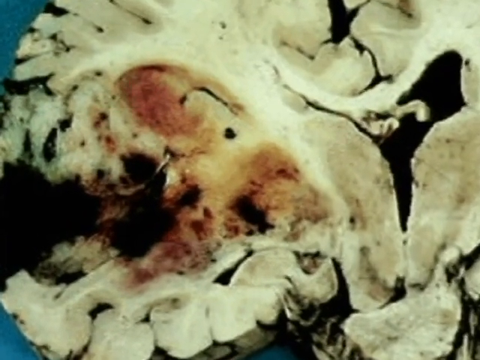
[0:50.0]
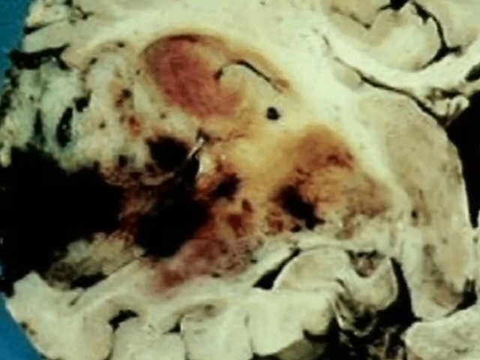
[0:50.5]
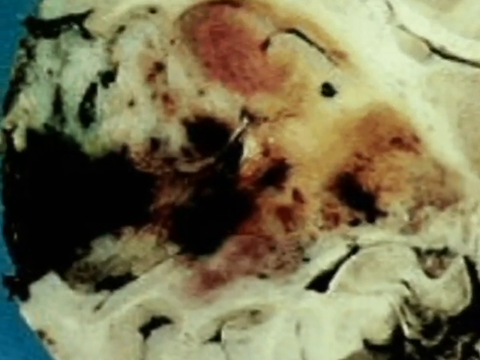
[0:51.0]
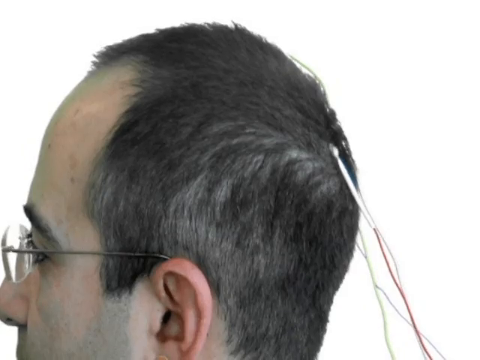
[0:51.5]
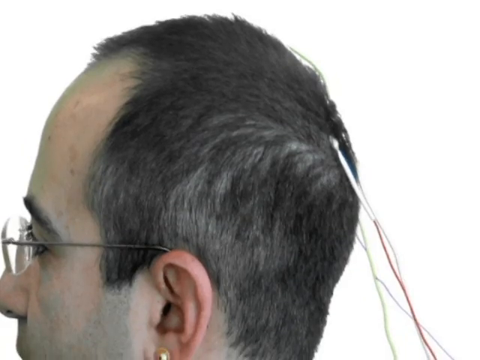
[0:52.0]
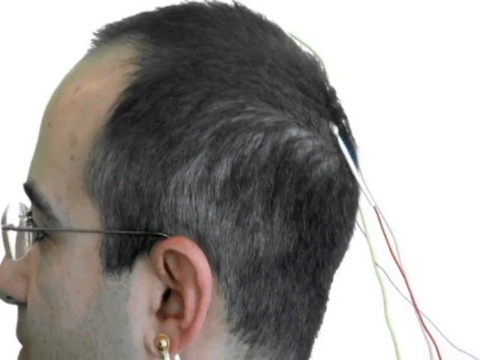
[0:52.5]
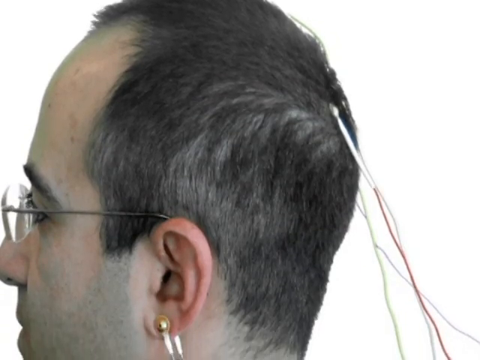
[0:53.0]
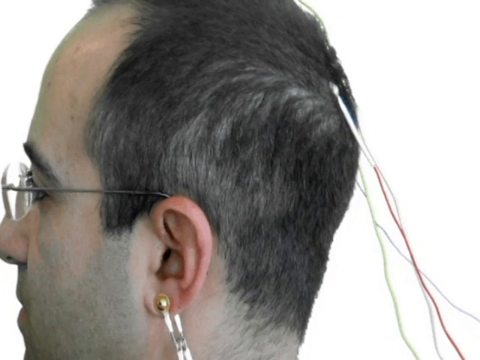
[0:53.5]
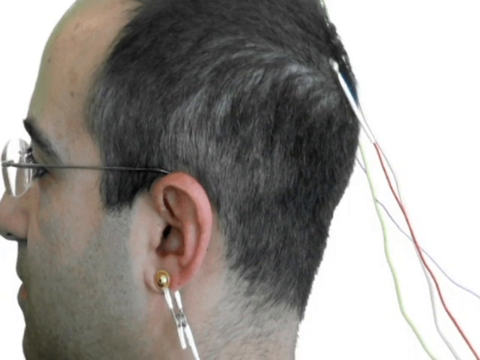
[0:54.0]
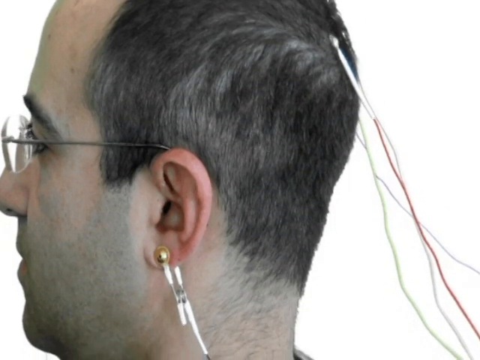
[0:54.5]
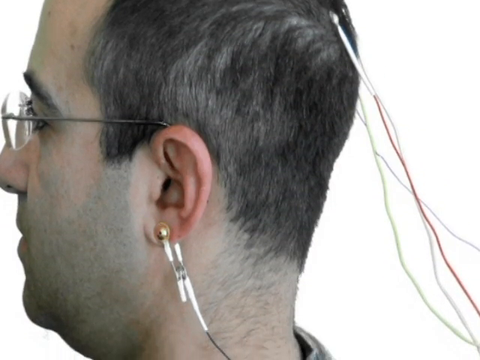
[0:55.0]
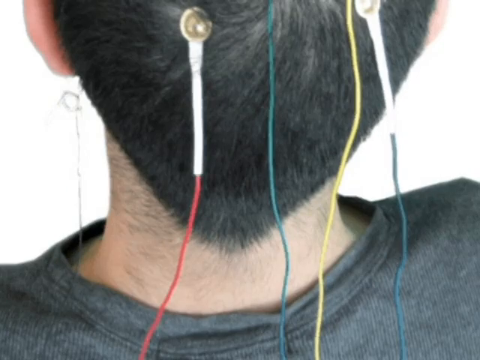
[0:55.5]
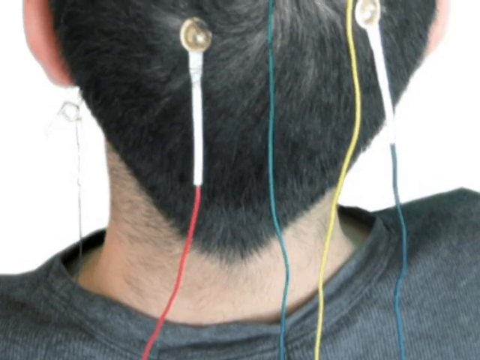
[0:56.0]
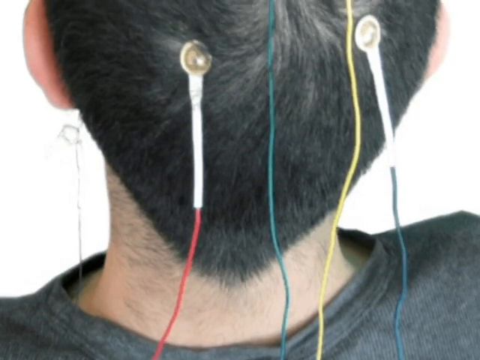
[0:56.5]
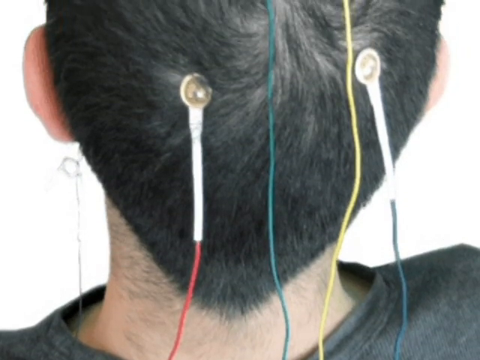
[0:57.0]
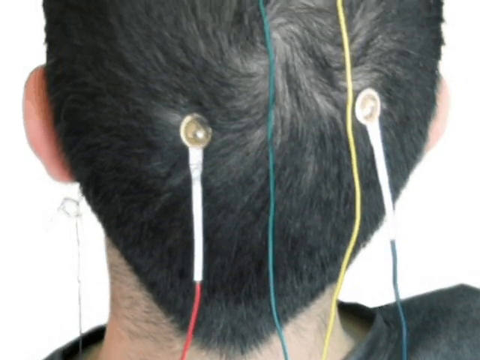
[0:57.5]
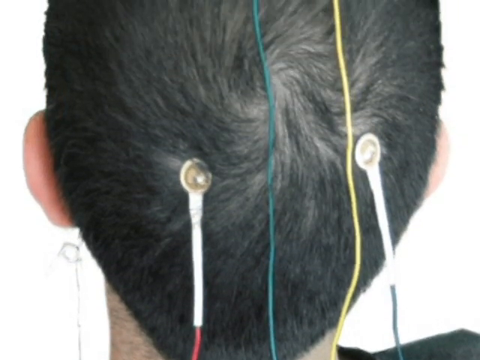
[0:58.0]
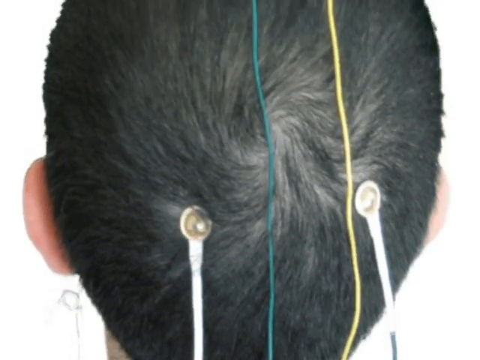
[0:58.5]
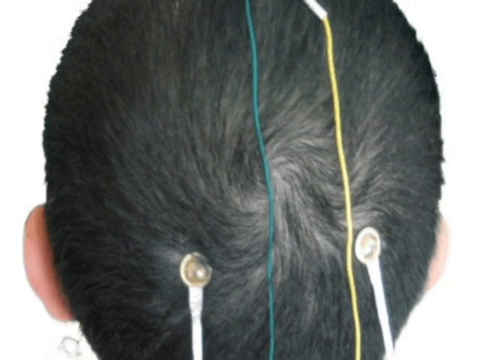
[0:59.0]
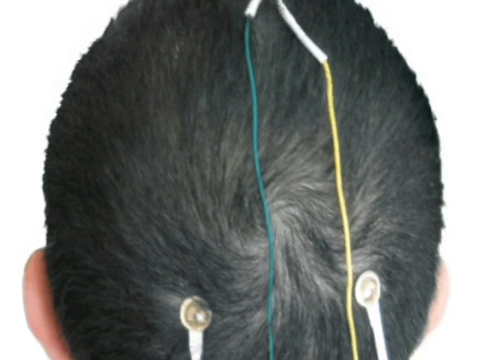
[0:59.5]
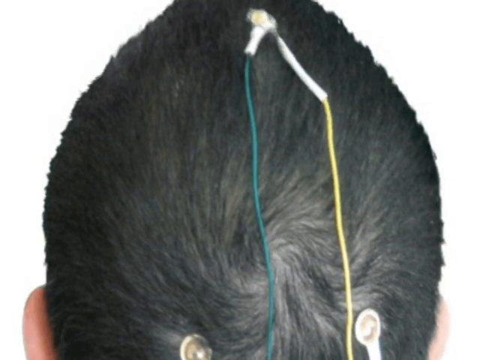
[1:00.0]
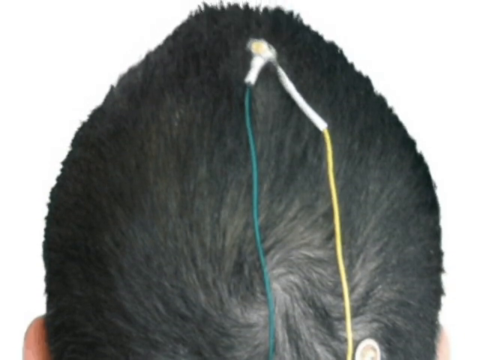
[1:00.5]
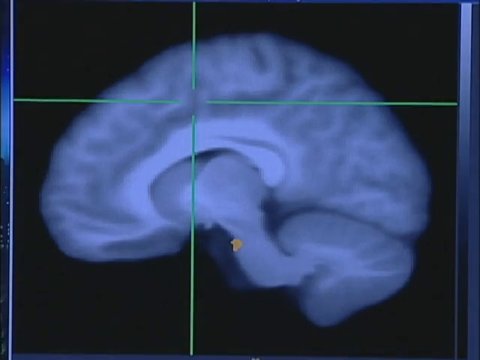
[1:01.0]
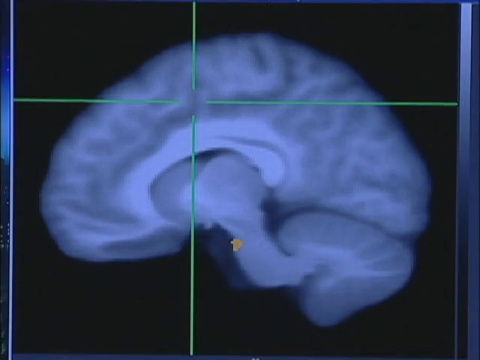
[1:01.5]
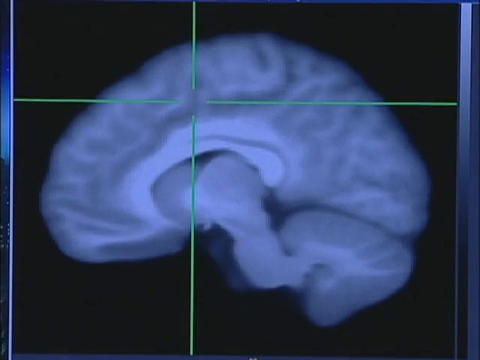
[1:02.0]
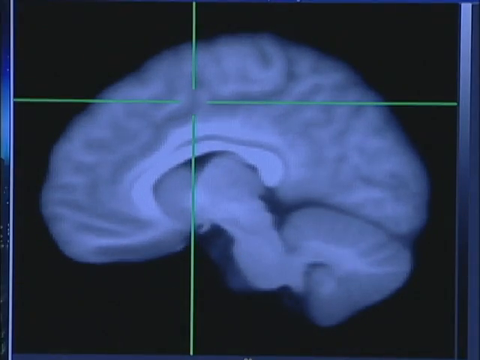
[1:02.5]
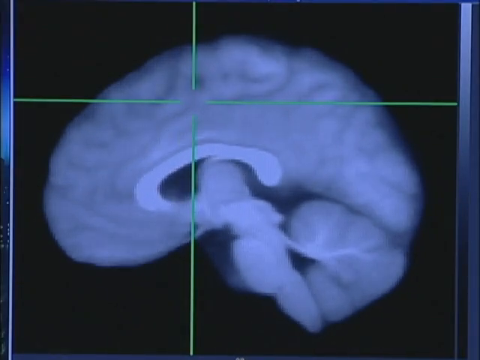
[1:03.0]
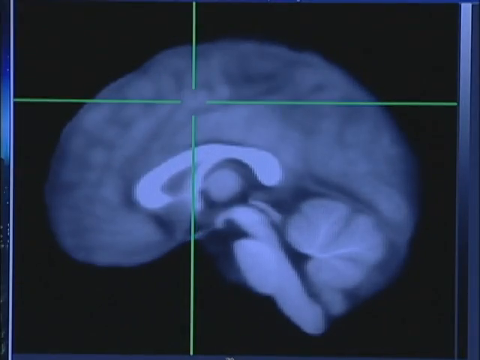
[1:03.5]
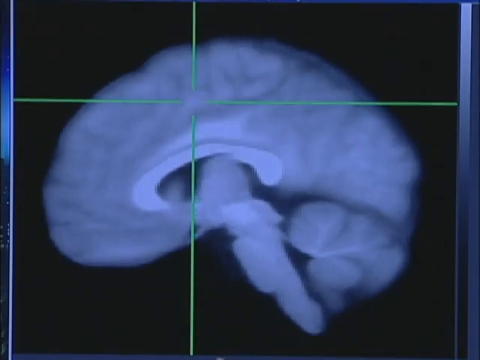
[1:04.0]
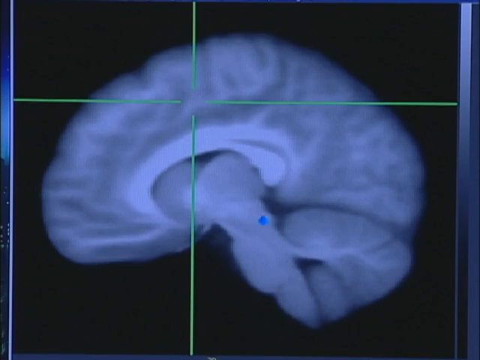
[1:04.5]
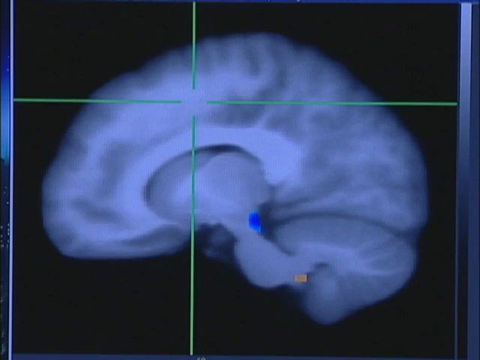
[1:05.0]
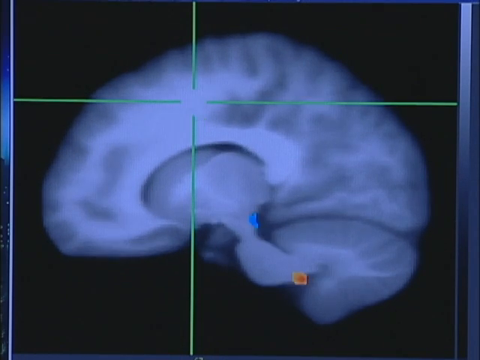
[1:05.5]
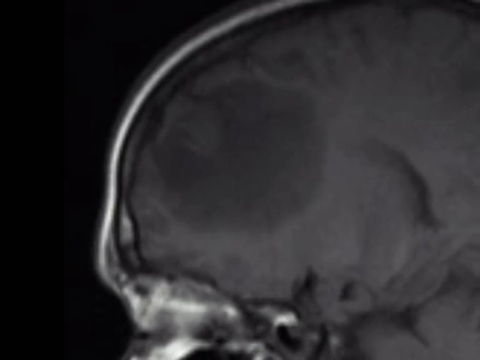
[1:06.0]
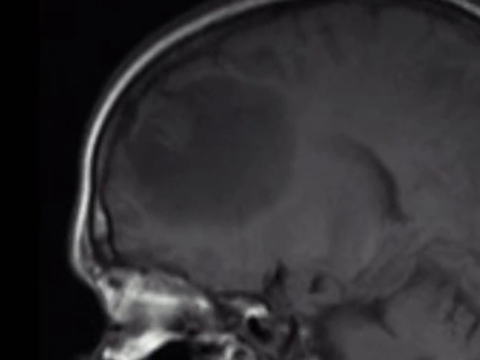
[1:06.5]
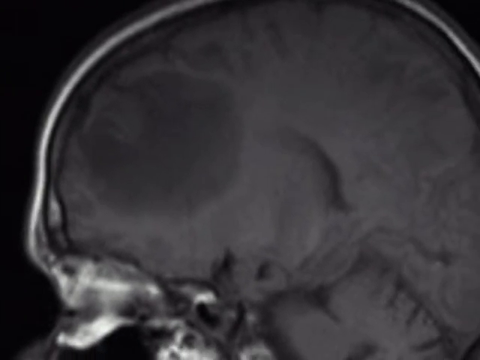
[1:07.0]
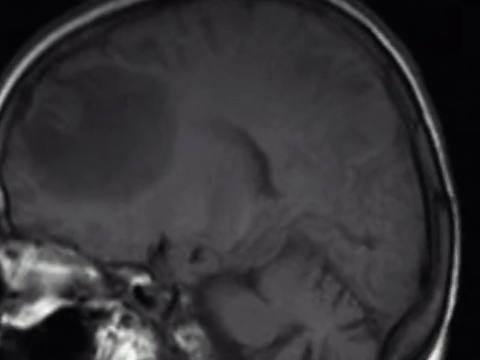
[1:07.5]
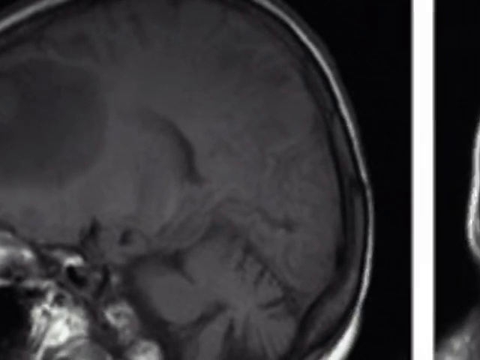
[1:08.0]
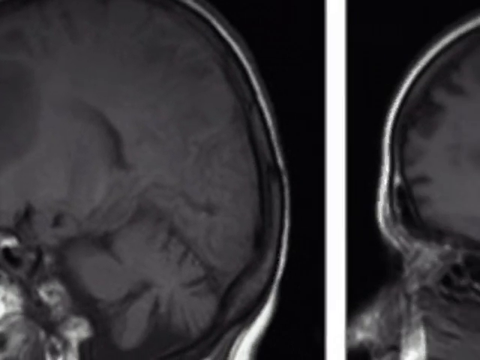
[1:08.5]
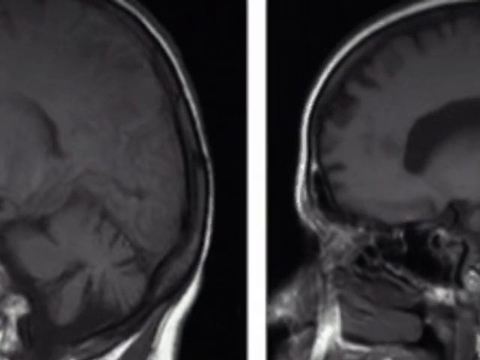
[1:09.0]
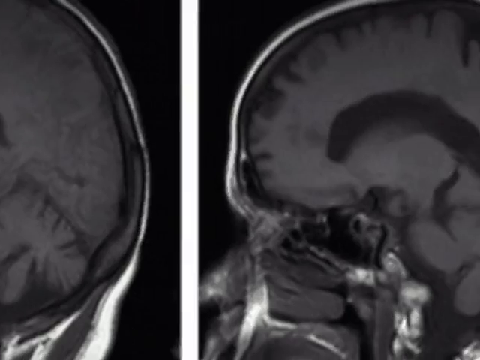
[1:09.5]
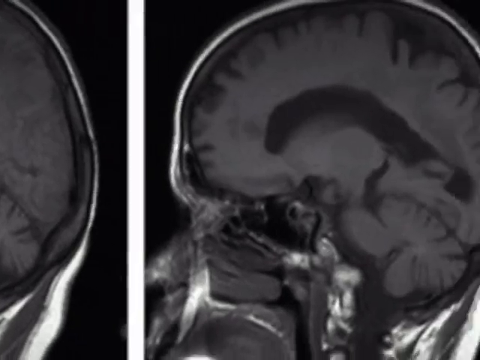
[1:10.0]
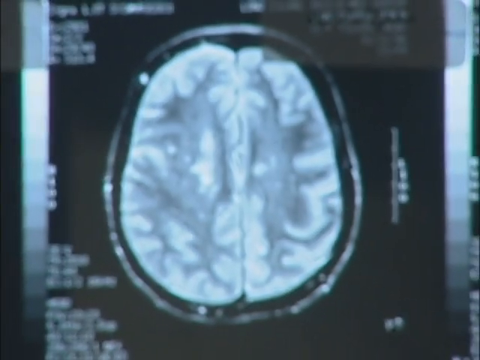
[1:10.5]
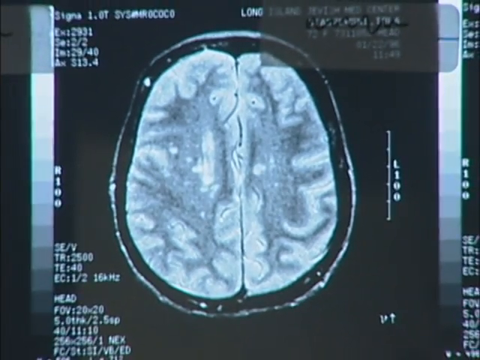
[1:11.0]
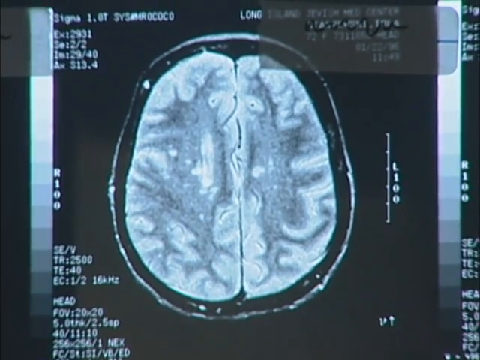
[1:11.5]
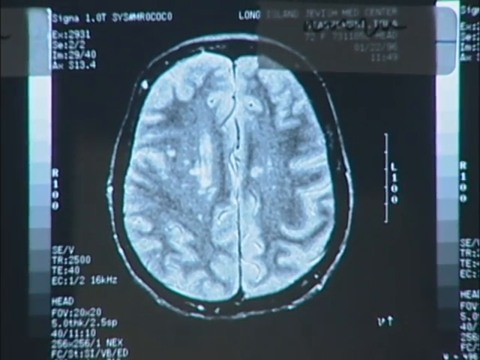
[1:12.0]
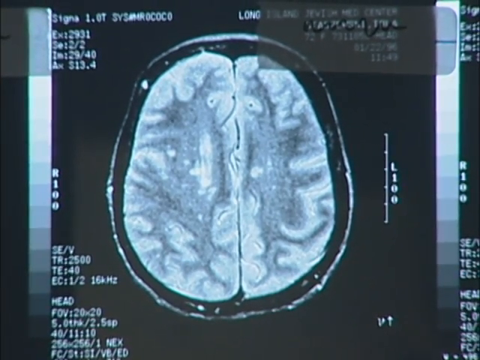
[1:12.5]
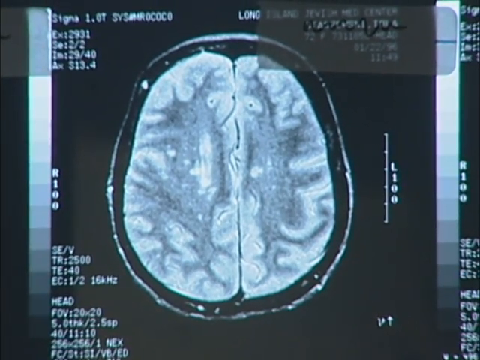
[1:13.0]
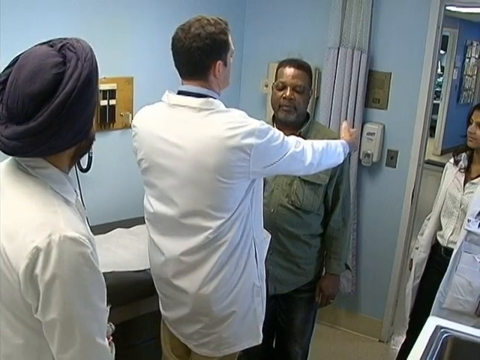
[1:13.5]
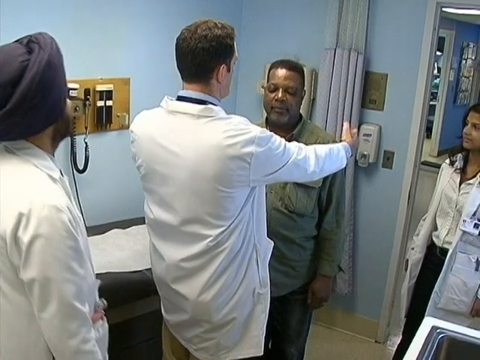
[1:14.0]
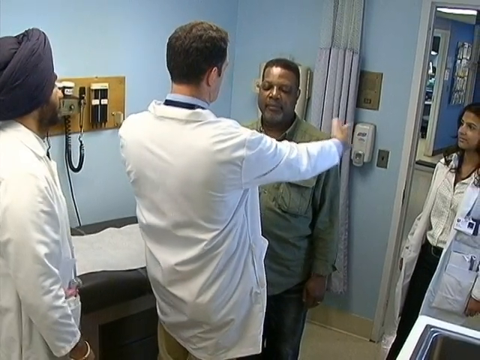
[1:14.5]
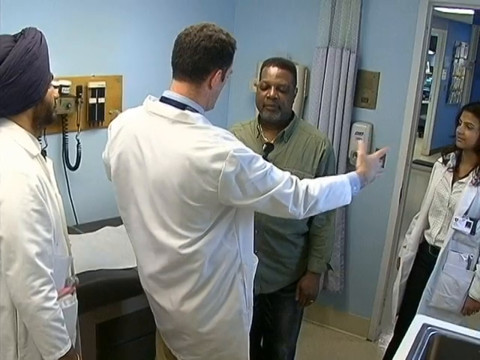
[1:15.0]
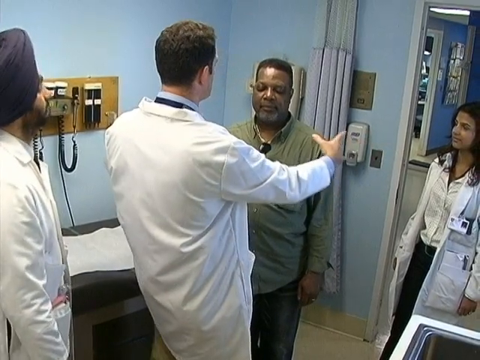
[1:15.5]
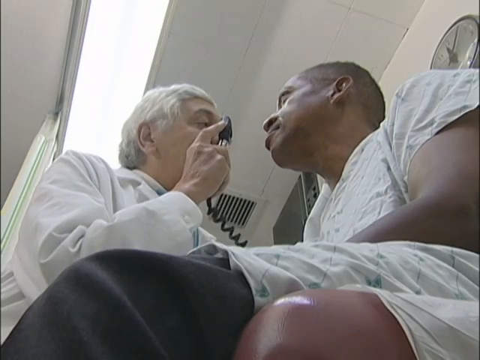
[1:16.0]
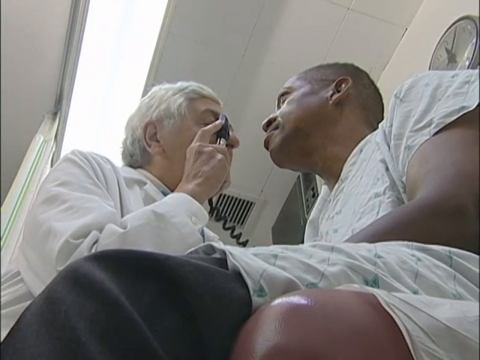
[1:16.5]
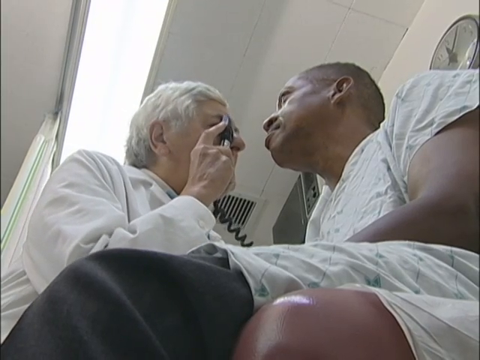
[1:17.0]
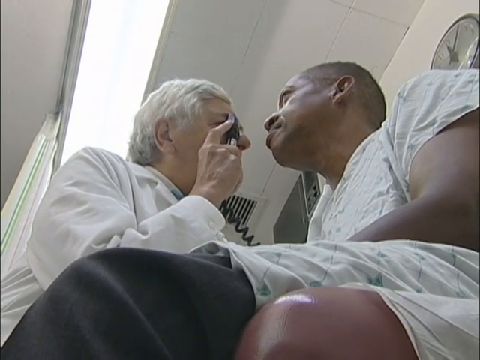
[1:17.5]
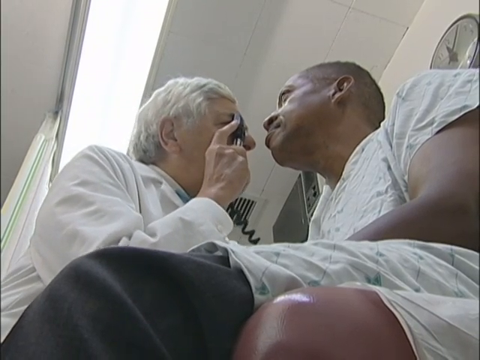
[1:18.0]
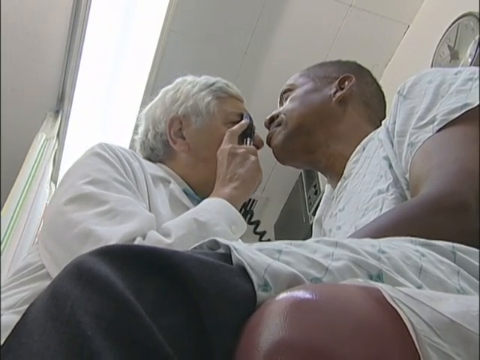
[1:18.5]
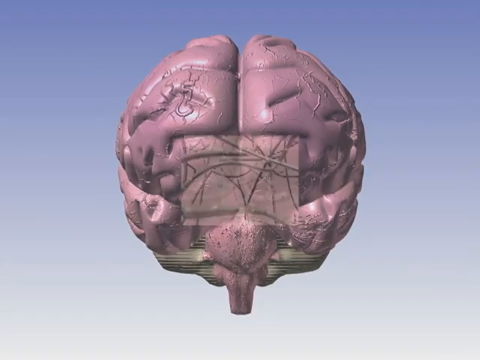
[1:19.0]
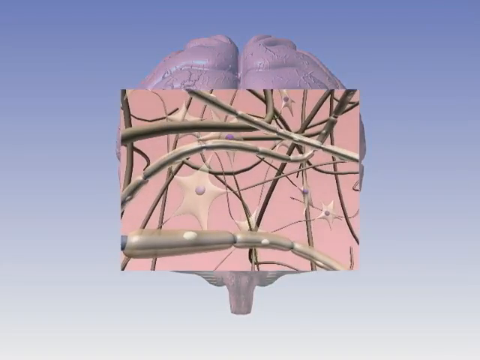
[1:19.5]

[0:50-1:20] A close-up shows a section of a damaged brain segment, with the black area where the brain is destroyed or missing. Next comes a side-on view of a man's head with electrodes or wires clipped to the back of his head. The camera pans down to show that he also has wires clipped to the base of his ear. A further shot of the back of his head shows four wires of different colours, red, green, yellow and blue or black, two at the top and two at the base. Next, a moving x-ray of a brain shows blue and beige areas, followed by a black and white x-ray of the skull and brain. The camera then moves to doctors or scientists examining a patient who is standing, wearing a green shirt, with his eyes closed. The examining doctor taps his shoulder to see his standing position while two other doctors look on. A doctor then looks through an eyepiece towards the patient's eye and gets closer. Another shot of a brain follows.